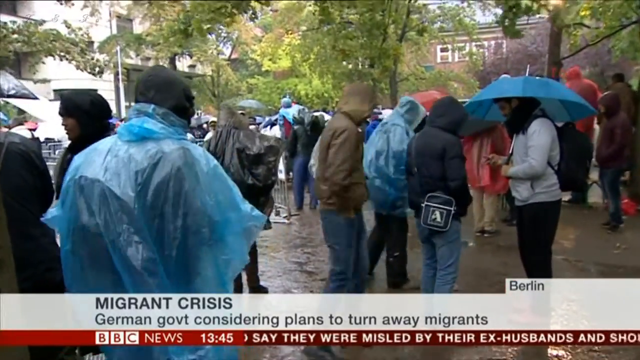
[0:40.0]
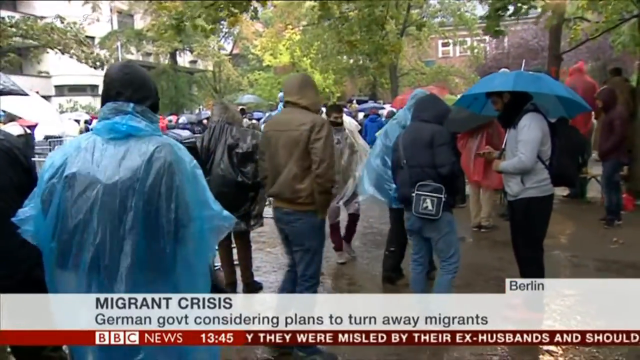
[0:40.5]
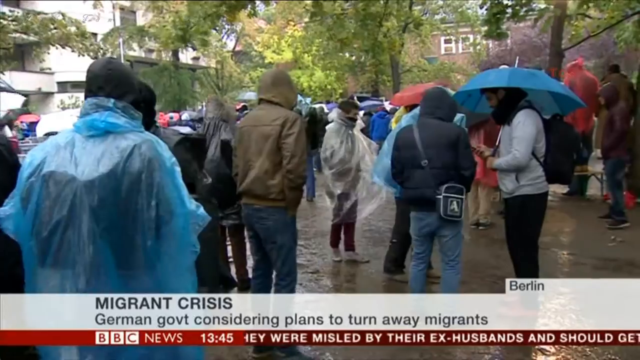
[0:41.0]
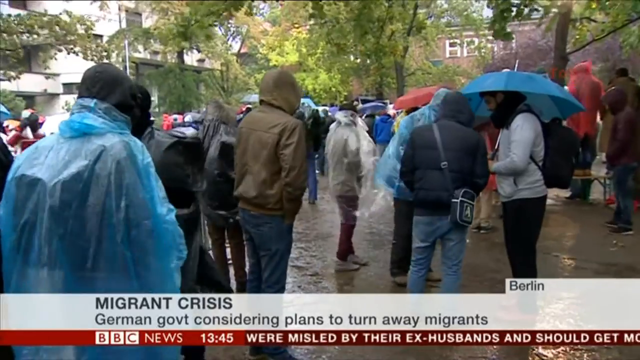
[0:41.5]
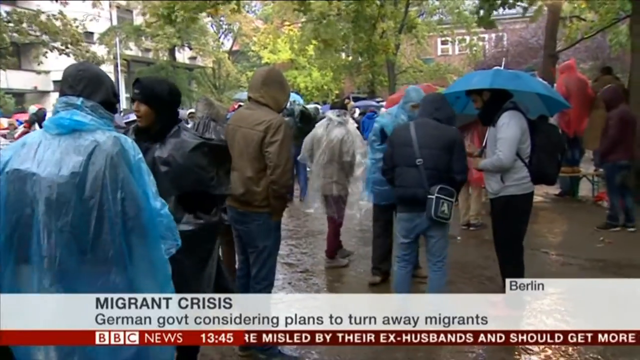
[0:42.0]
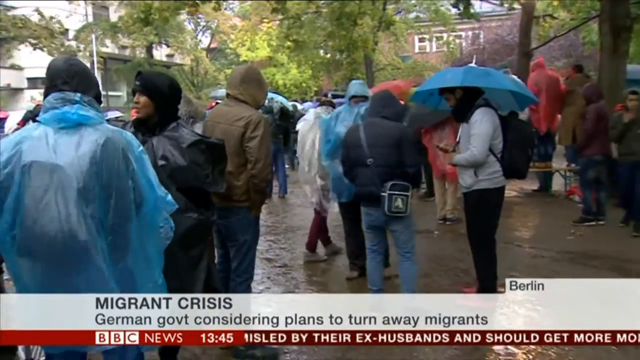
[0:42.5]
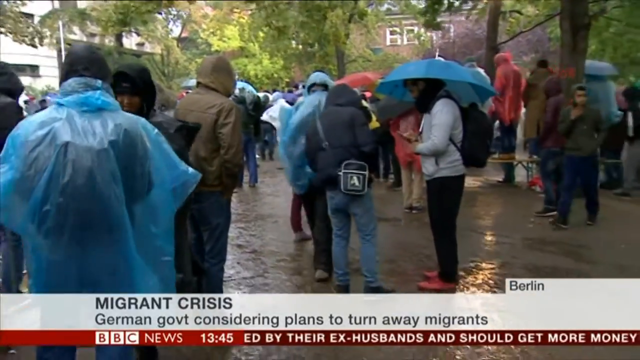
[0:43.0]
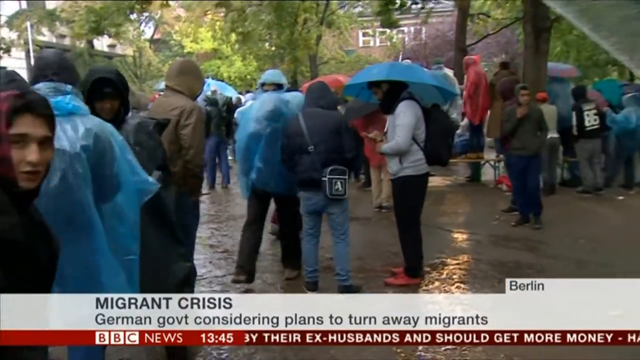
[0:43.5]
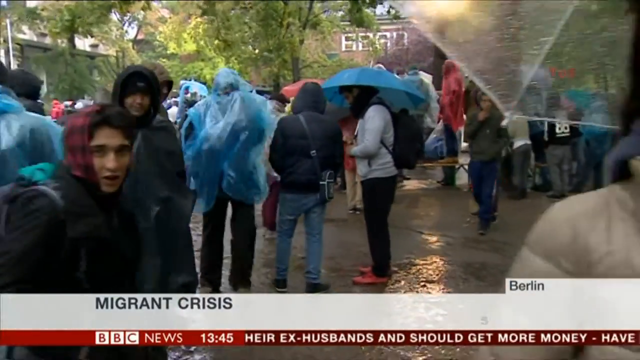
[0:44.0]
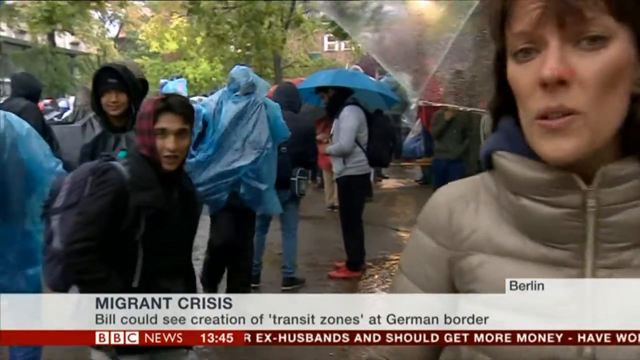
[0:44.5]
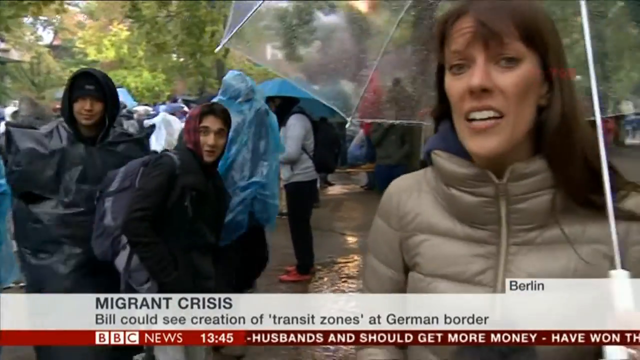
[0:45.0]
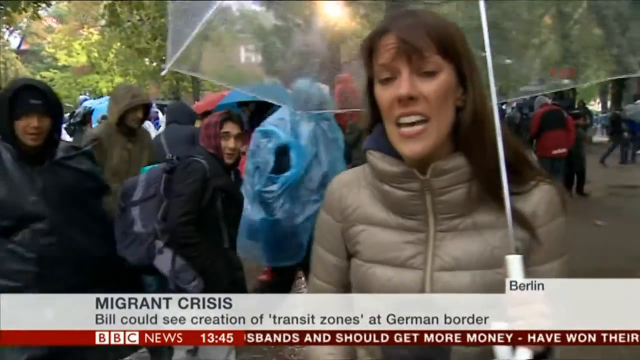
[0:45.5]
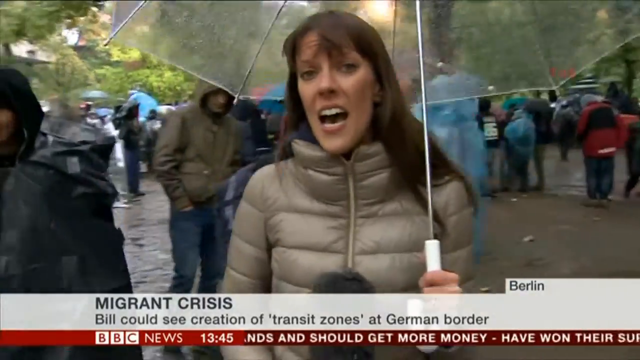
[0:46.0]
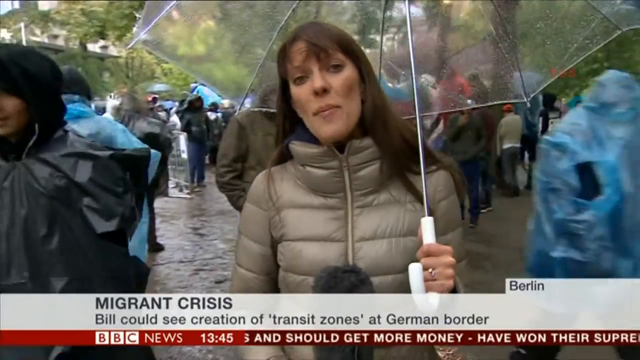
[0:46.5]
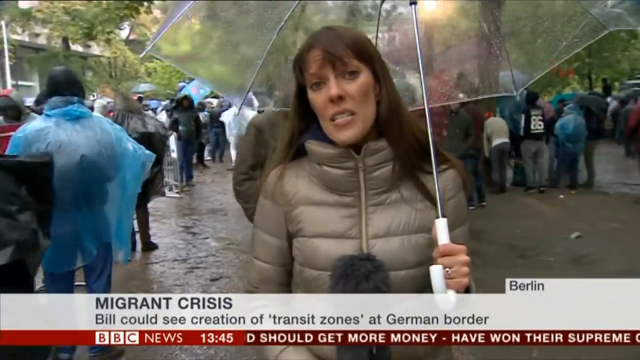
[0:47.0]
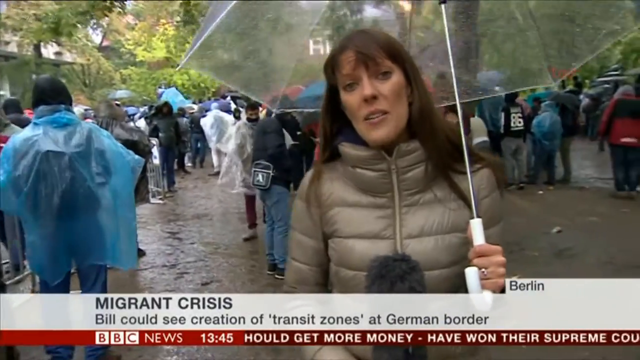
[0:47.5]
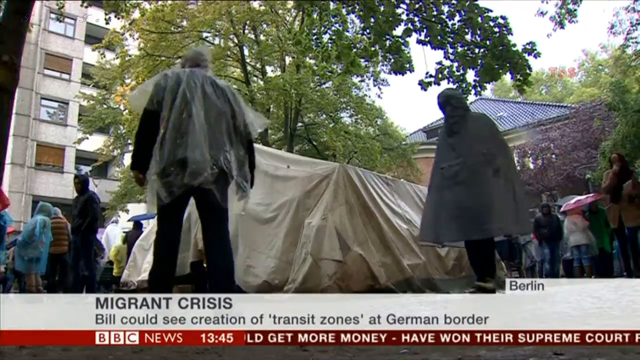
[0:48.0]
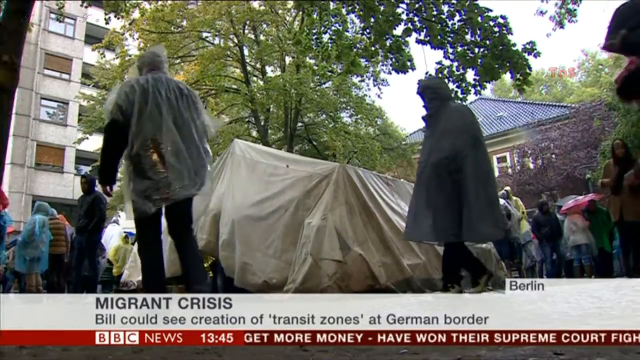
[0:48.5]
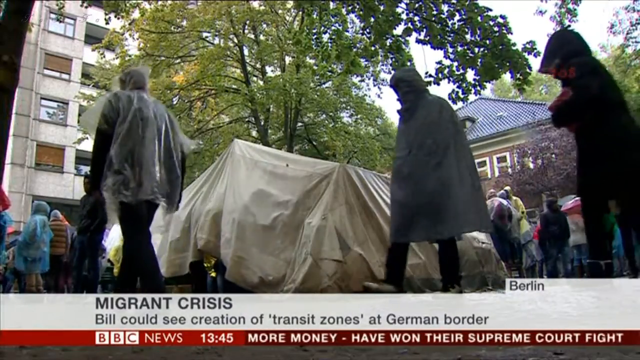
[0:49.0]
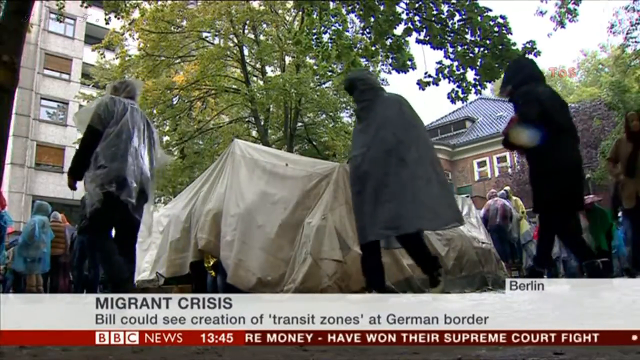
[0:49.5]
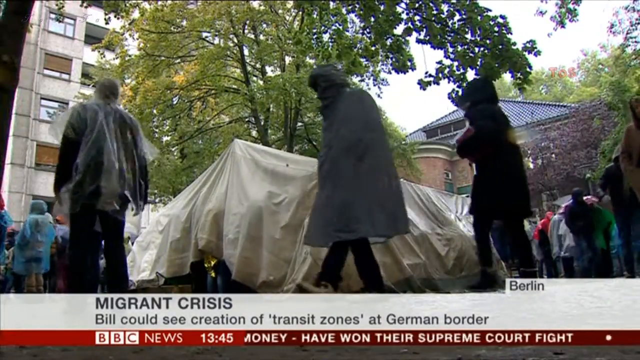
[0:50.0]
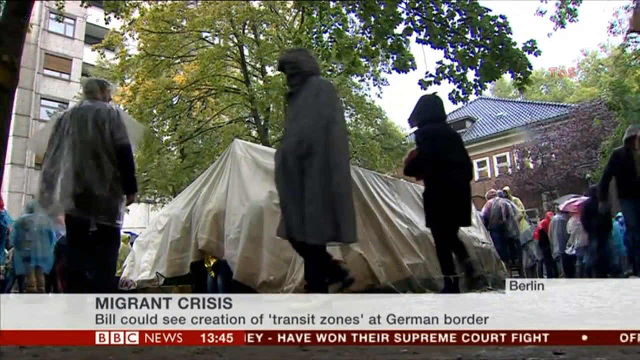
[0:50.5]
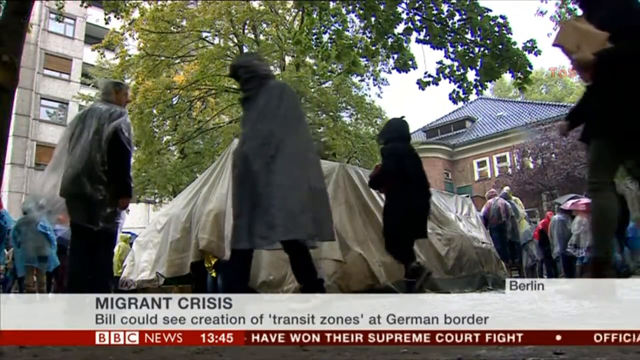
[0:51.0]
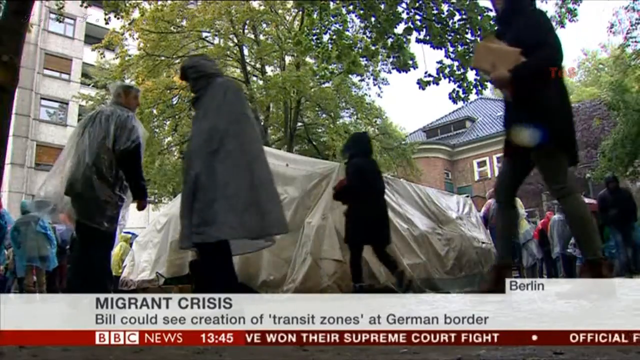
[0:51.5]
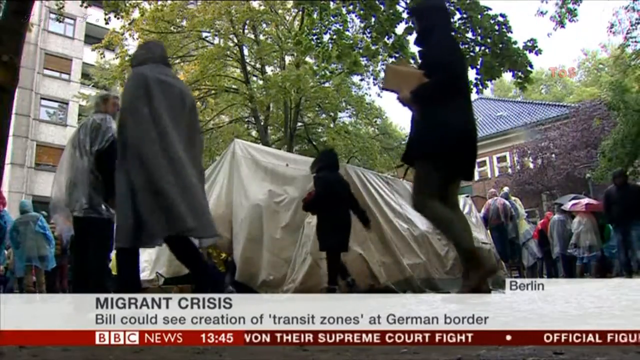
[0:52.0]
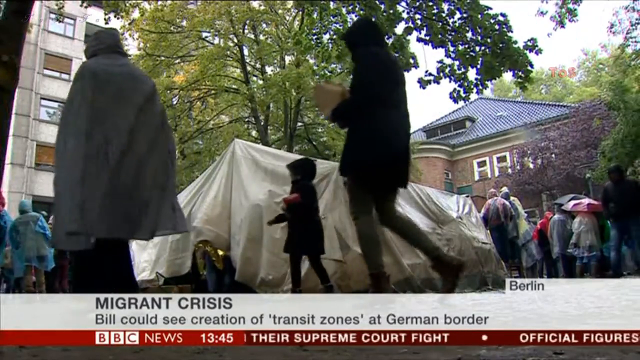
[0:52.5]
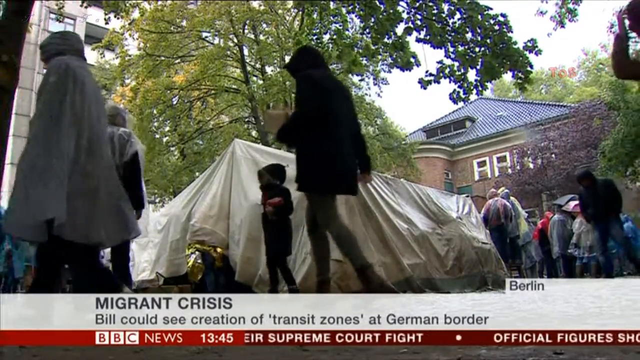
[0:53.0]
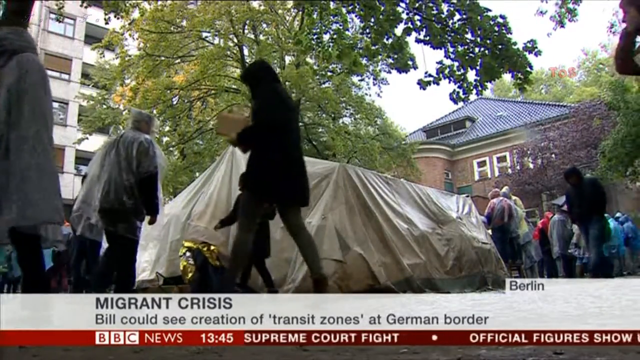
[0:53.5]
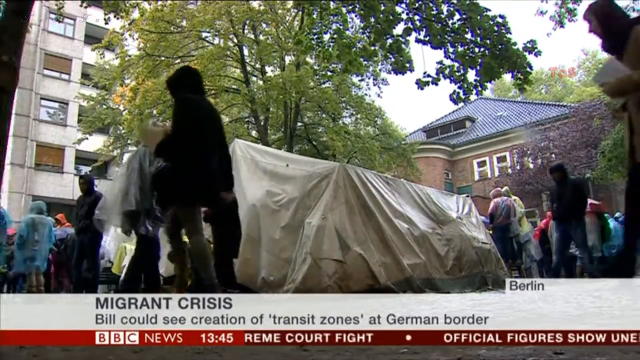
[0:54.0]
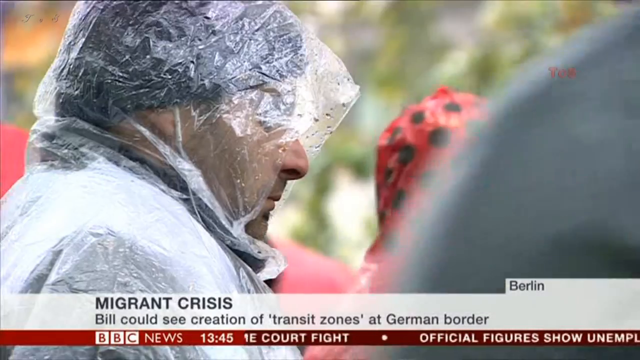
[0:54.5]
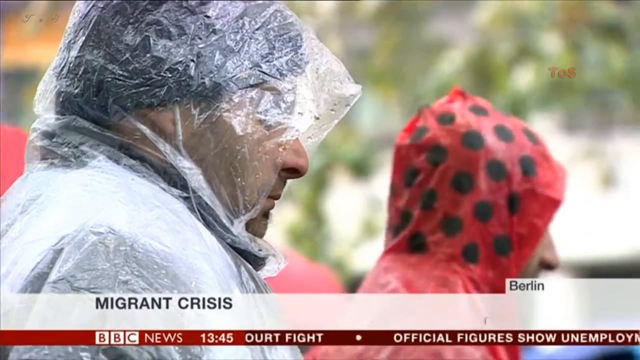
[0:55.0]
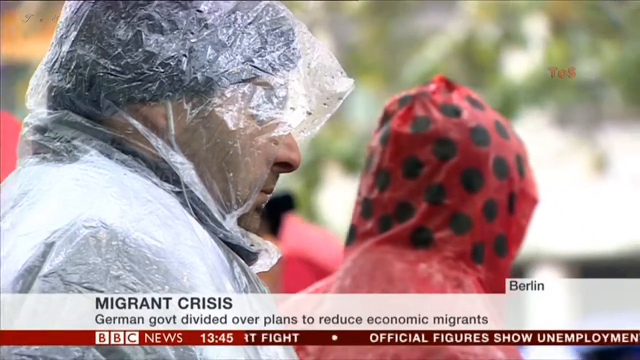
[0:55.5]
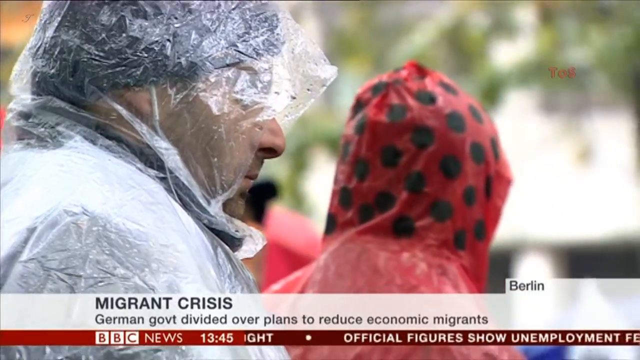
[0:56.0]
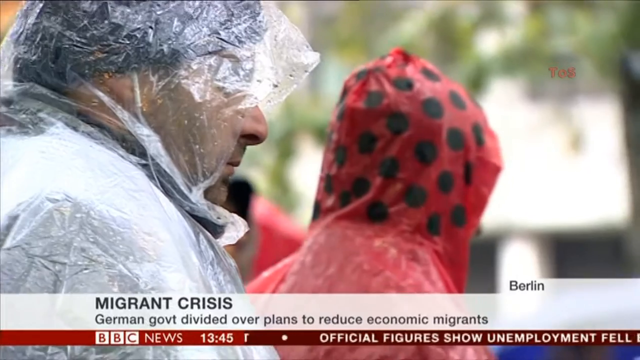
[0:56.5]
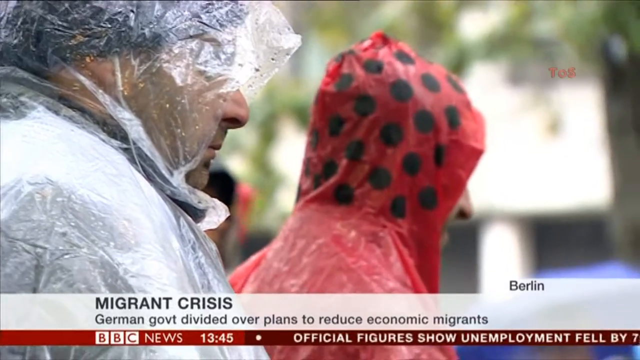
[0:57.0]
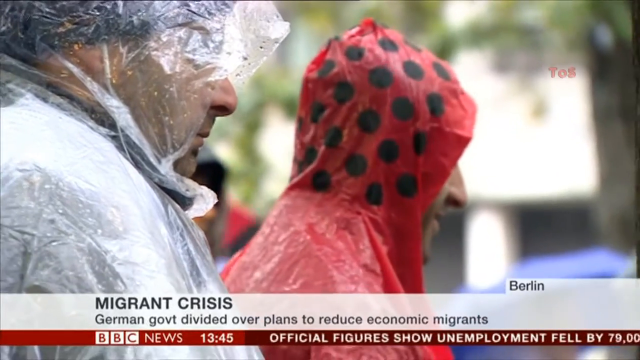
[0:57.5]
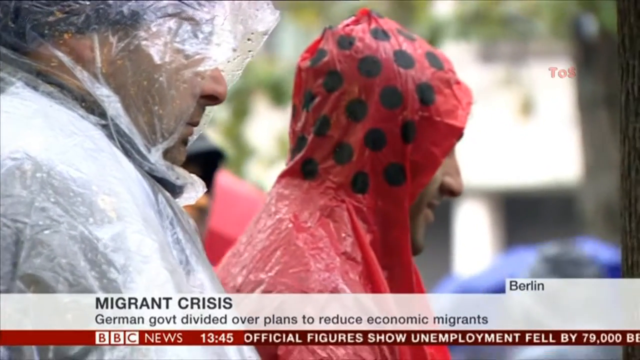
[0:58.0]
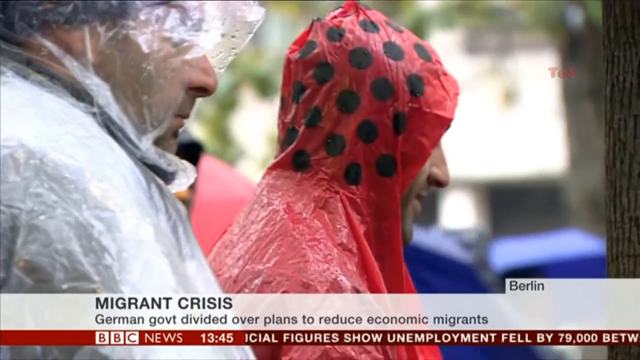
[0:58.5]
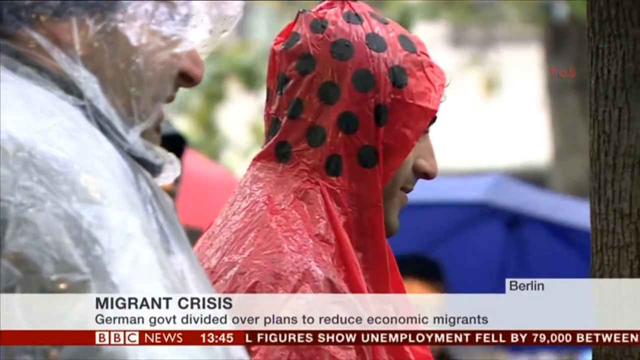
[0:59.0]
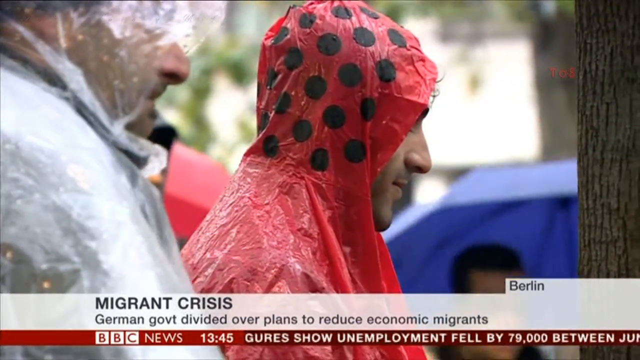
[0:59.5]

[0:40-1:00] Outside, in what is probably a court building or some type of major public area, the migrants have set up tents. There is one large tent with individuals surrounding it outside. They wear raincoats, and some have hoods on their regular coats. A building in the background kind of looks residential, but it is possibly a public building. The camera pans to another individual, who seems to be in their mid-40s, with a plastic raincoat over their head and a black hat underneath. Another person, a man, wears a red raincoat with black polka dots. The two stand side by side and seem to be staring off into the distance. Other individuals walk by with umbrellas over their heads.